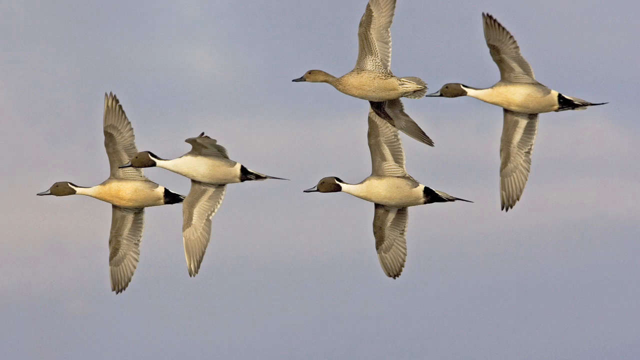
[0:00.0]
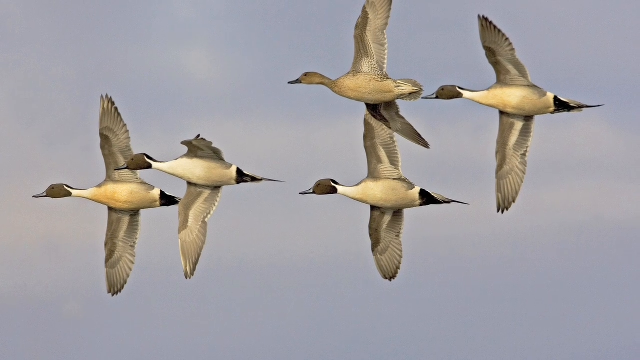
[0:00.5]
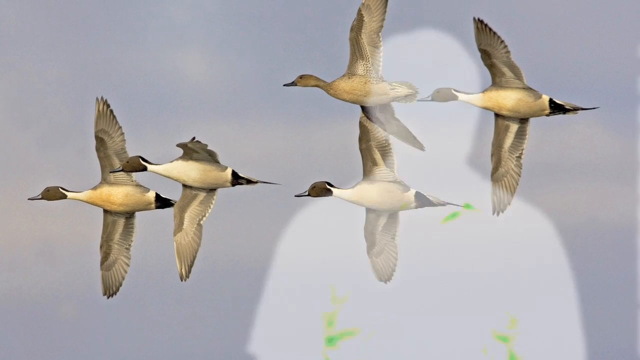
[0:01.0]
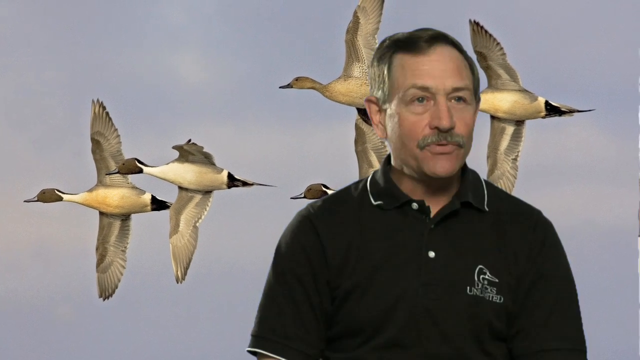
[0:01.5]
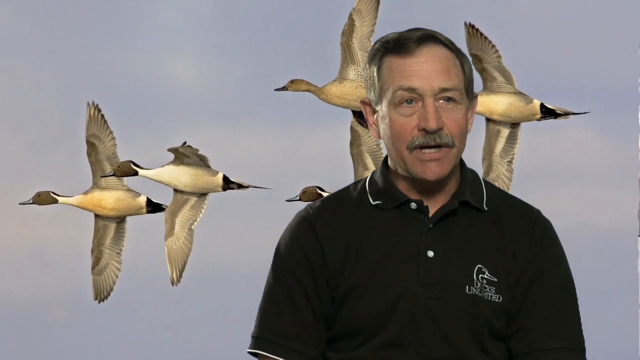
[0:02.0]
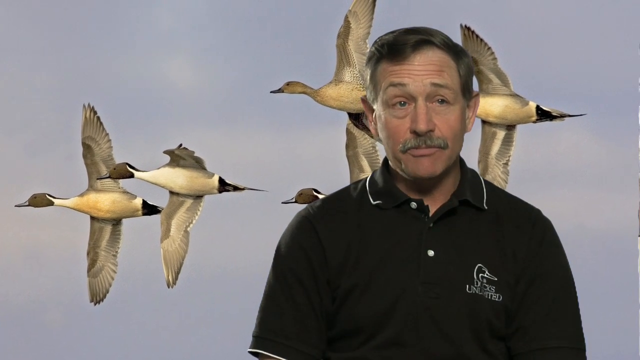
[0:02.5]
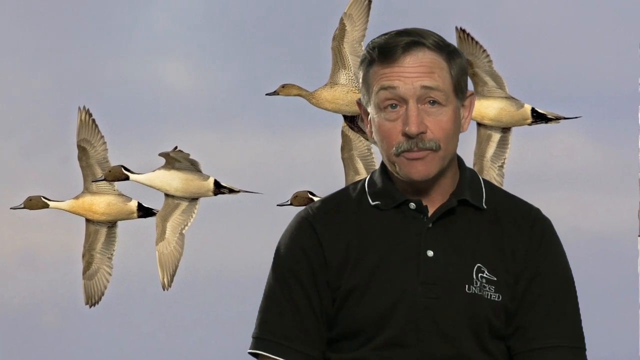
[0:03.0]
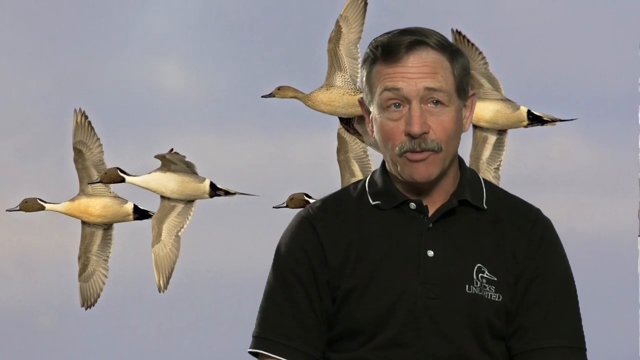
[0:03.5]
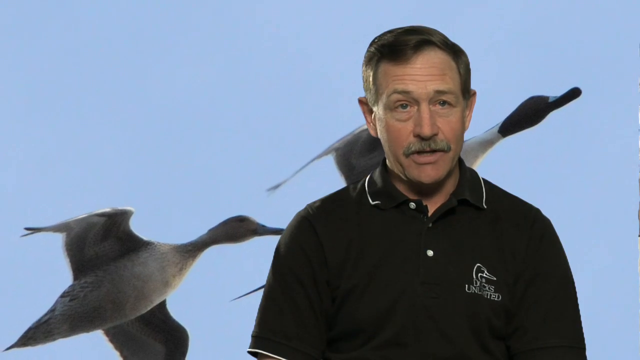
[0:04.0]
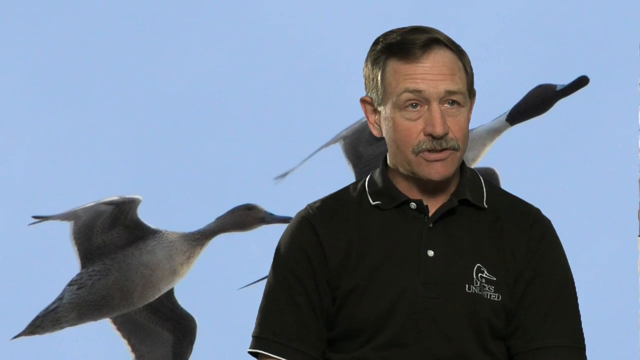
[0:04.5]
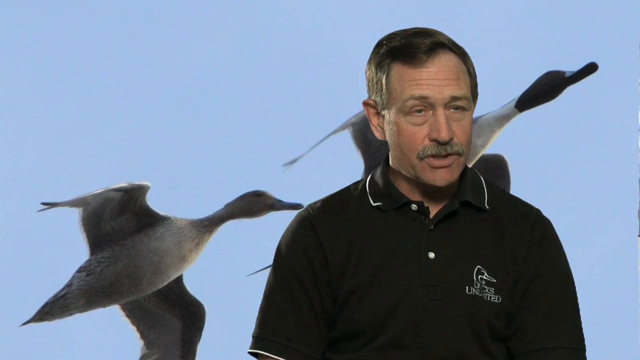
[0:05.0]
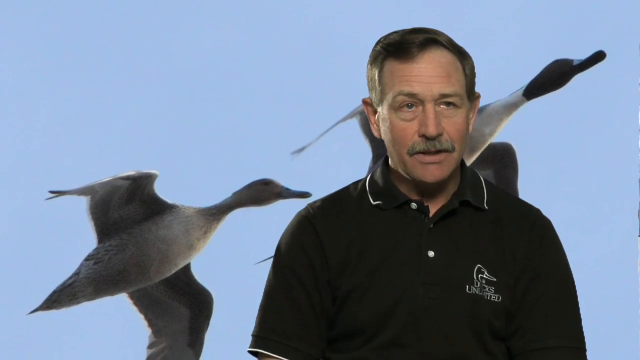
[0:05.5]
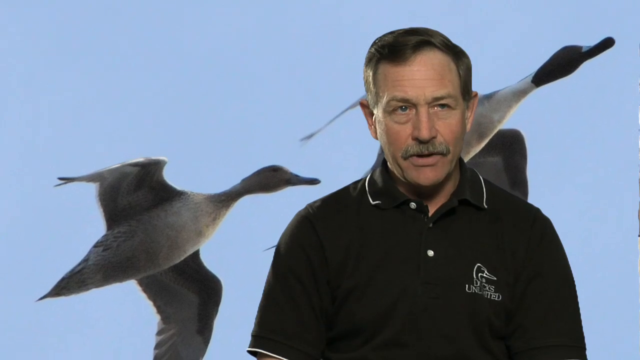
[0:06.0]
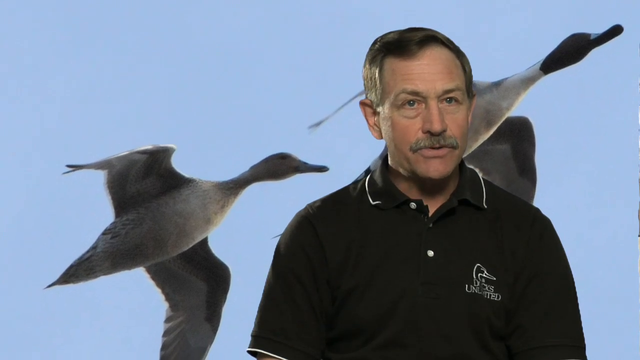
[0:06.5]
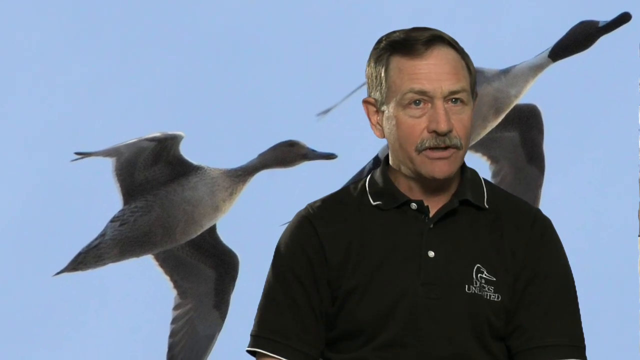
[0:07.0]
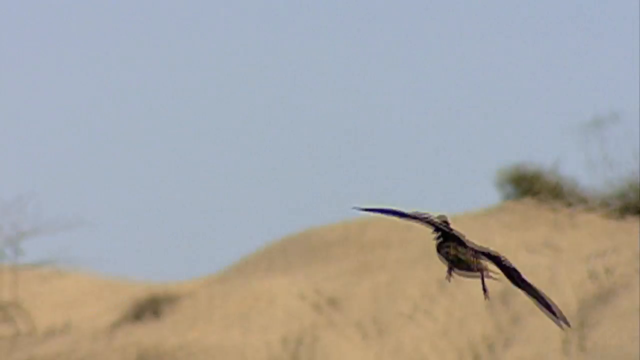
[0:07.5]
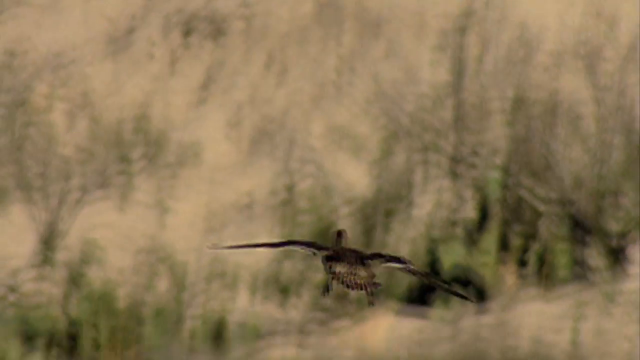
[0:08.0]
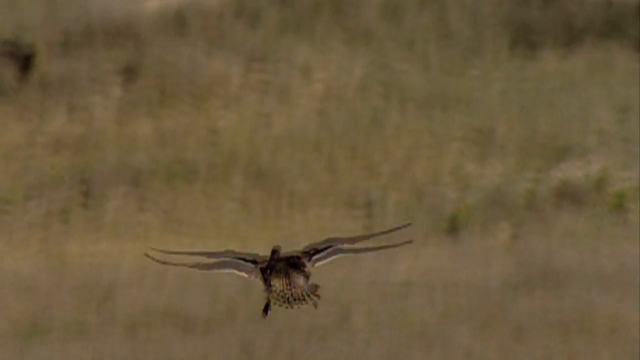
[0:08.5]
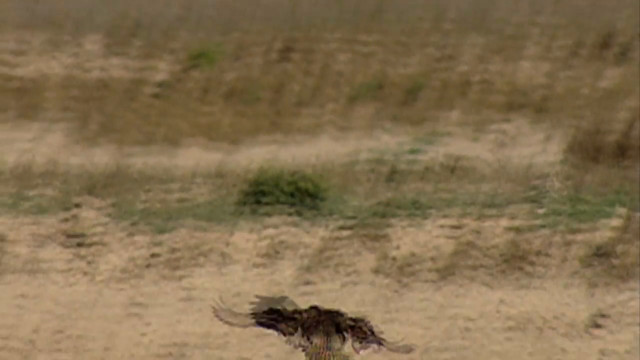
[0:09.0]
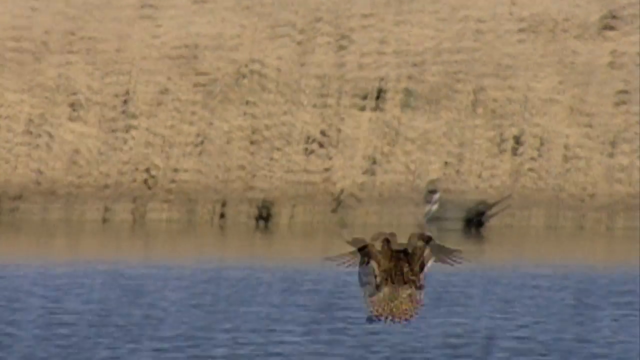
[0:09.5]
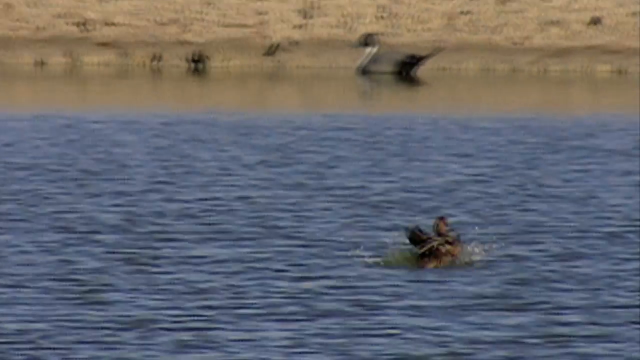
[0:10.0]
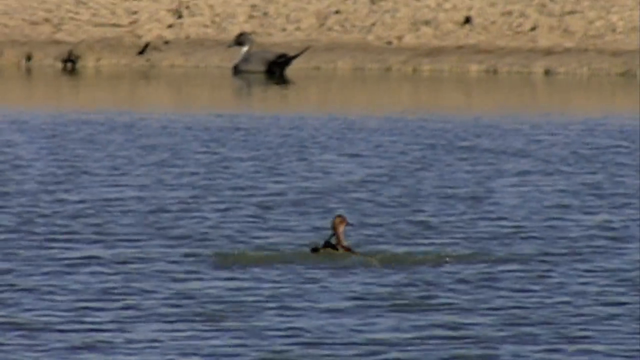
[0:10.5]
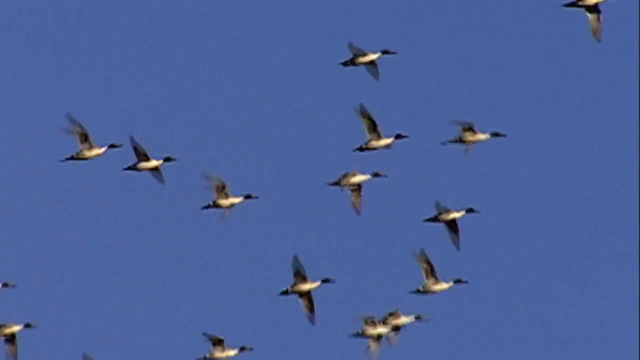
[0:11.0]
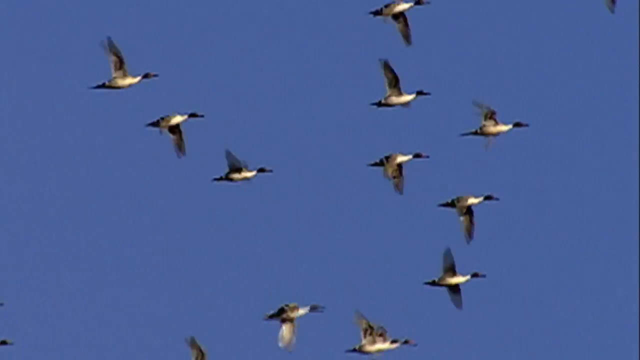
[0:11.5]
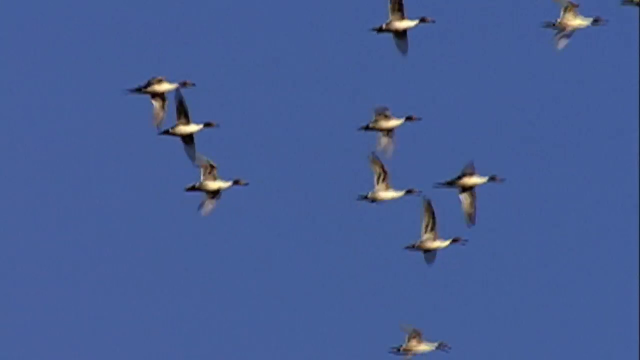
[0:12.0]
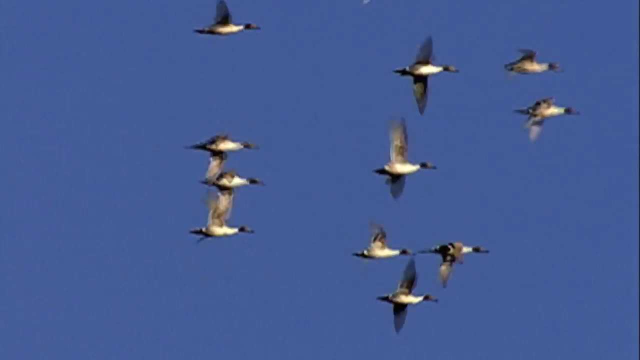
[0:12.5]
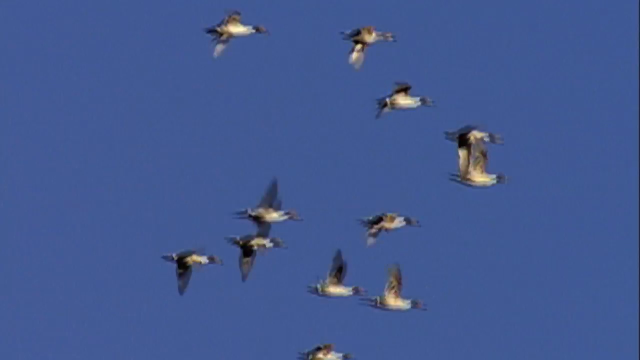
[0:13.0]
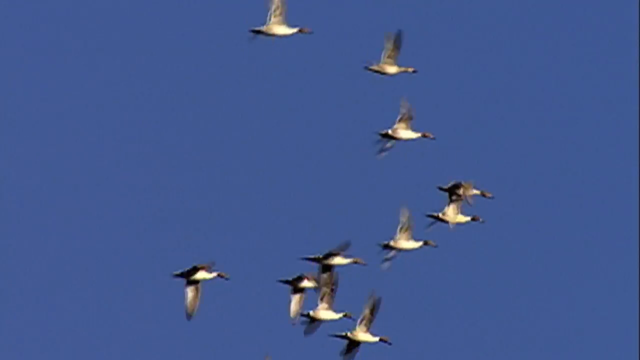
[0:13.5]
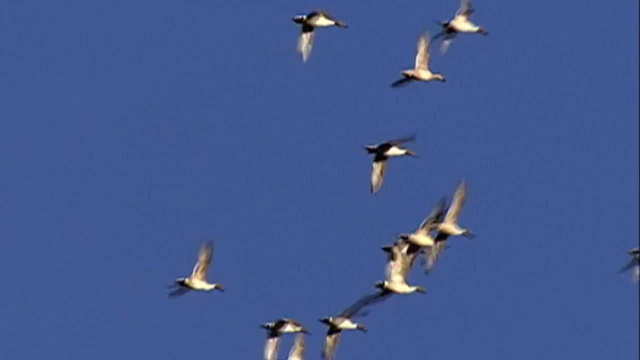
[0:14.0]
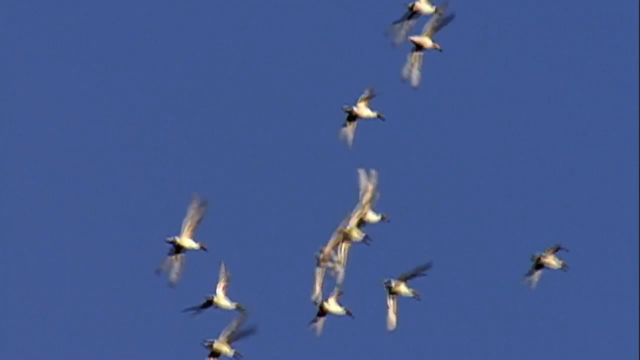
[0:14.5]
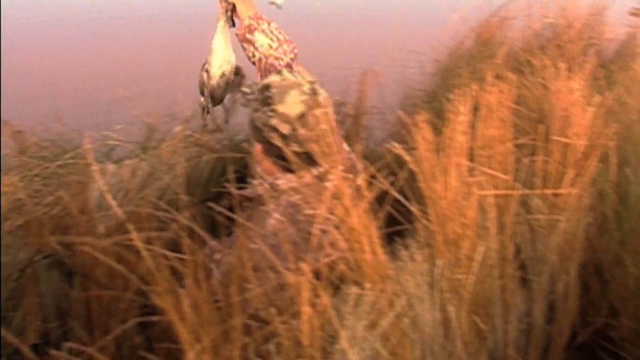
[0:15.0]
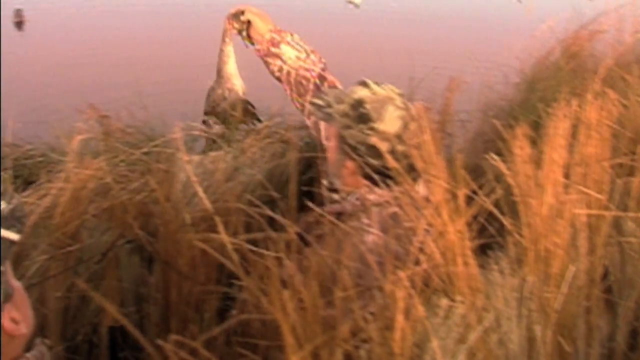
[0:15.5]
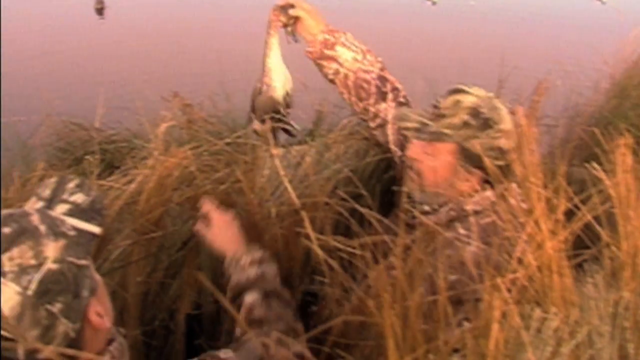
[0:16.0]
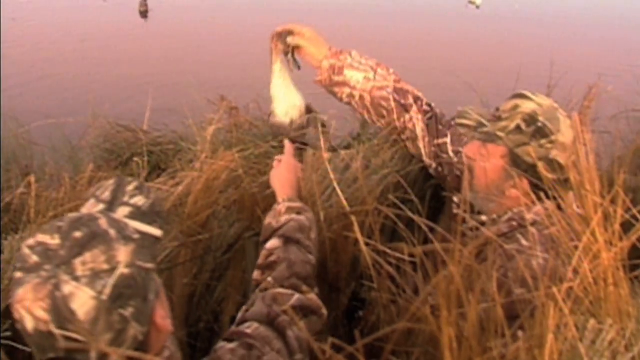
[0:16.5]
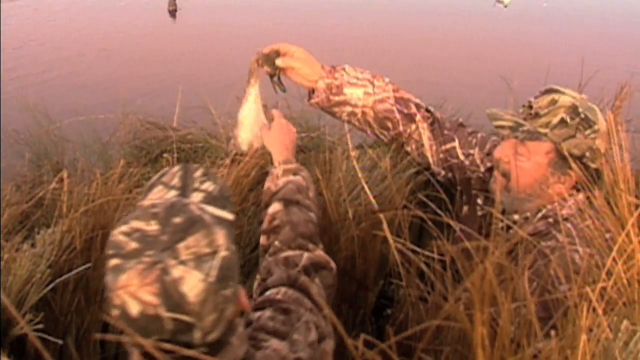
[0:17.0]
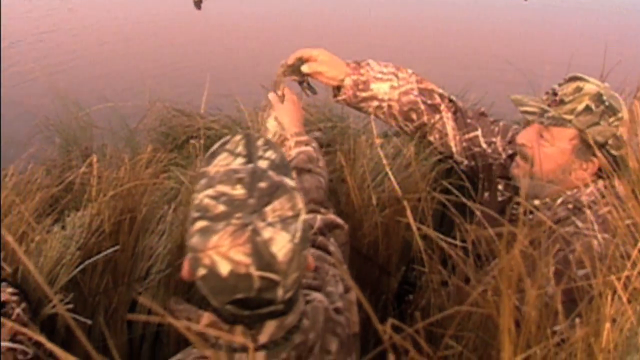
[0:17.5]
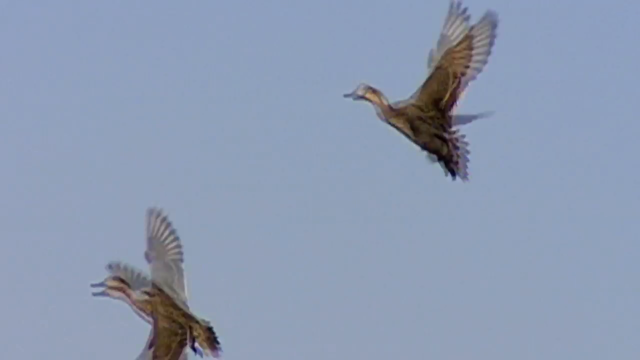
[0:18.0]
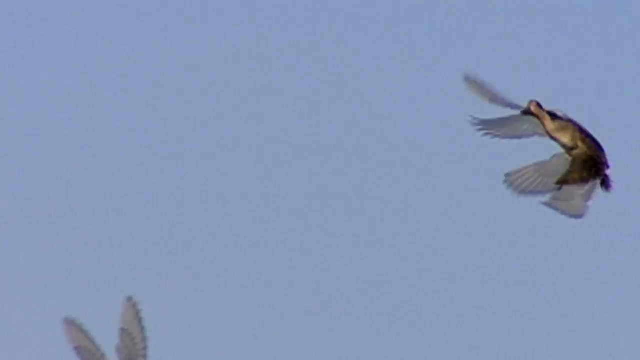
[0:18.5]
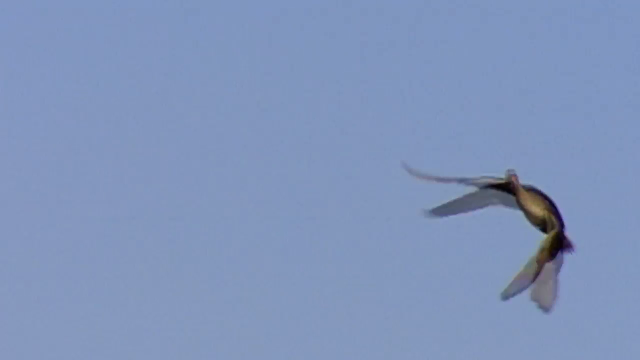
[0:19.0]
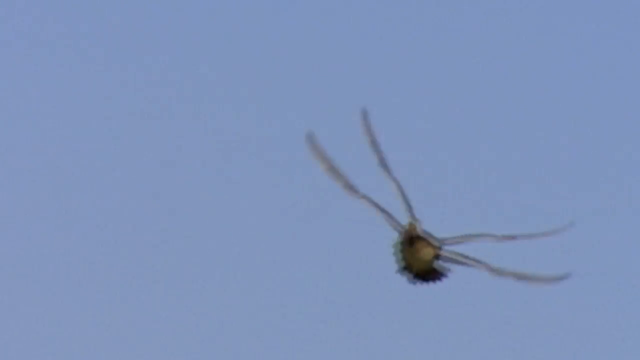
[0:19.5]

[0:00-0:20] Against a white void background, five bees fly toward the left side of the screen, all with their wings fully out. A man suddenly appears on the right-hand side in the foreground, wearing a black polo with a white-rimmed collar; on the front right is an embellishment of a duck with "Ducks Unlimited" underneath. He speaks to the camera. The video cuts to a goose or duck landing on a lake, then to about 20 geese flying hectically toward the right side of the screen. Next, a hunter in full camo stands in tall grass holding a dead goose by its neck, and the shot turns to show the other hunter. The video then returns to a frontal view of geese flying at the camera against a clear blue sky.